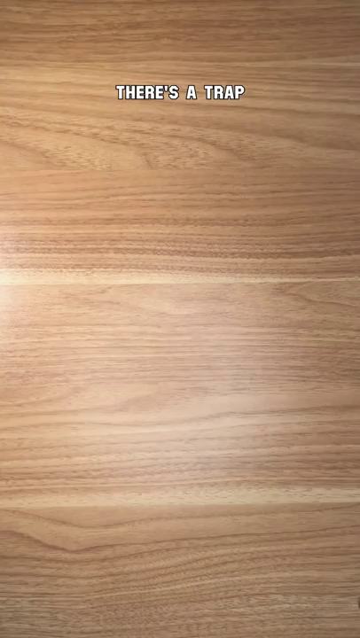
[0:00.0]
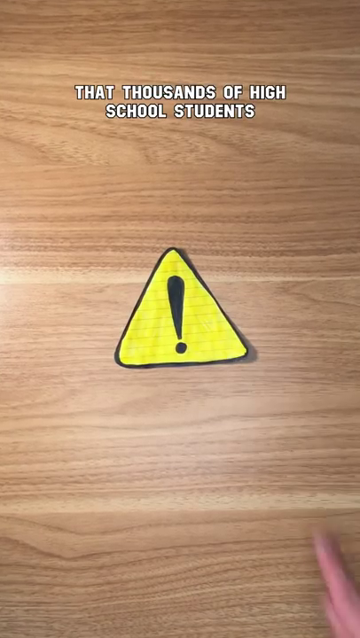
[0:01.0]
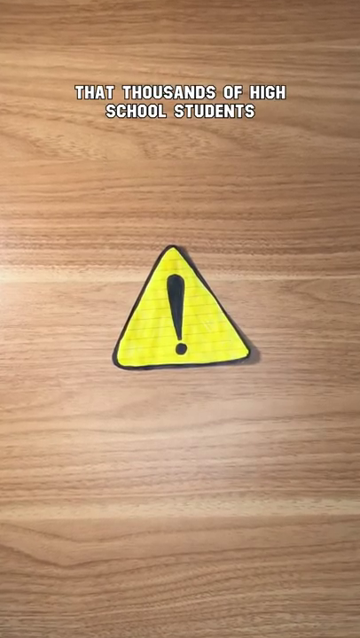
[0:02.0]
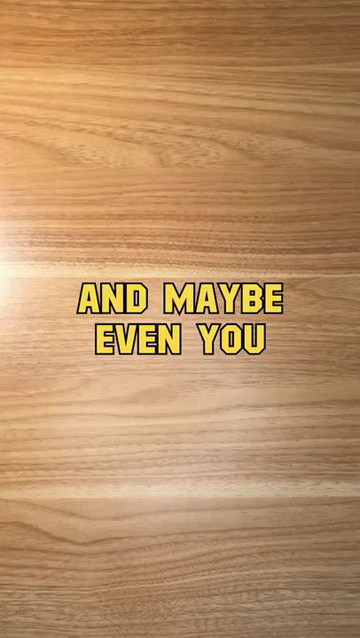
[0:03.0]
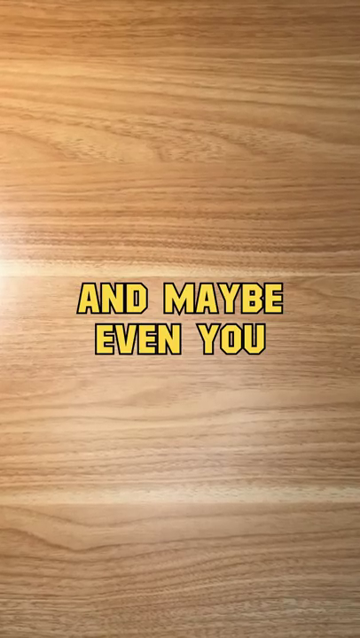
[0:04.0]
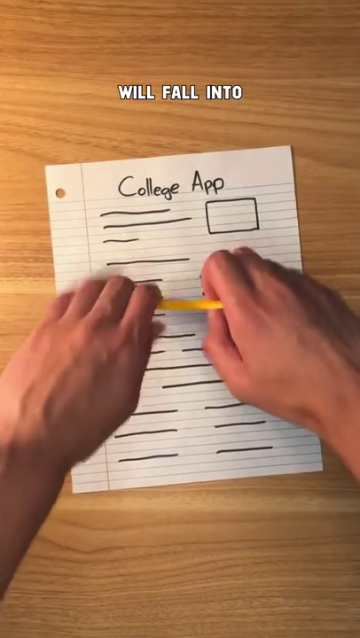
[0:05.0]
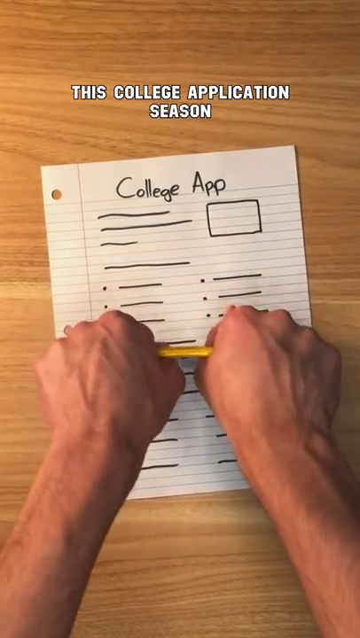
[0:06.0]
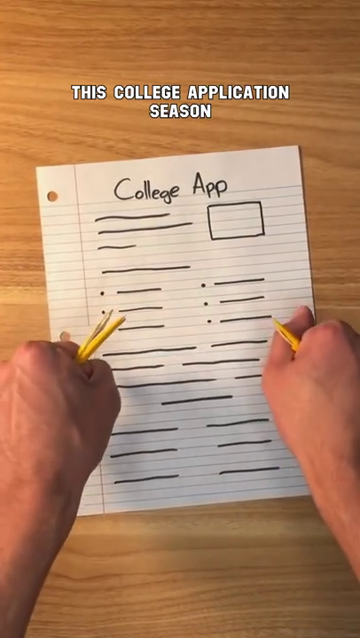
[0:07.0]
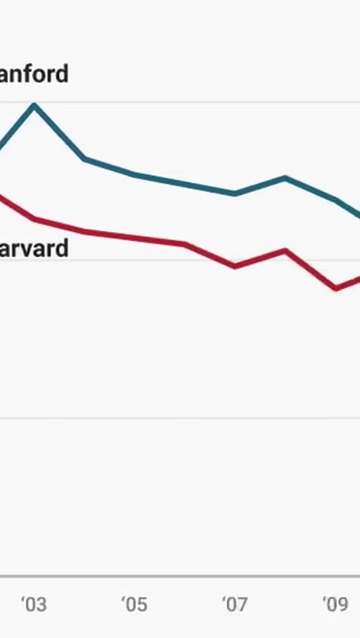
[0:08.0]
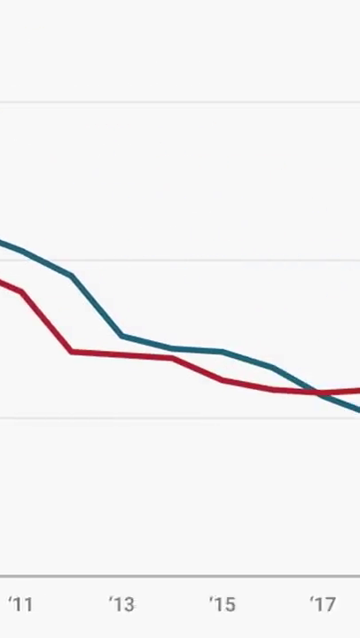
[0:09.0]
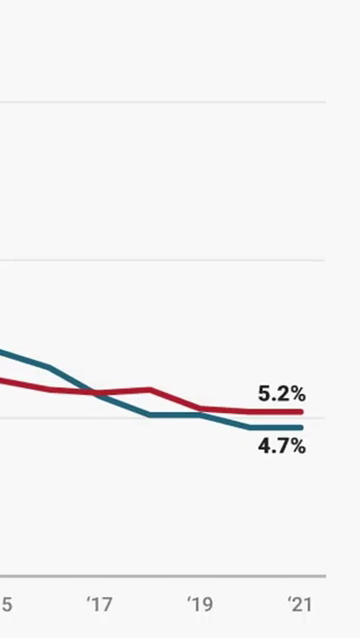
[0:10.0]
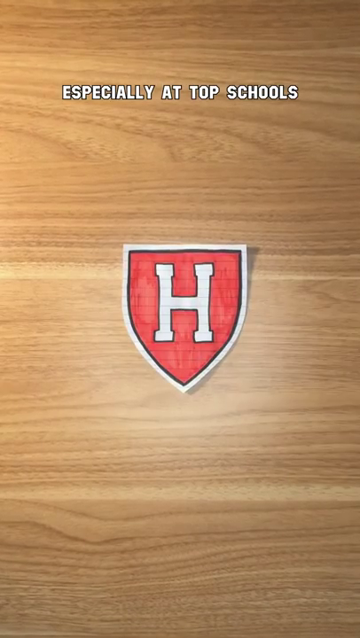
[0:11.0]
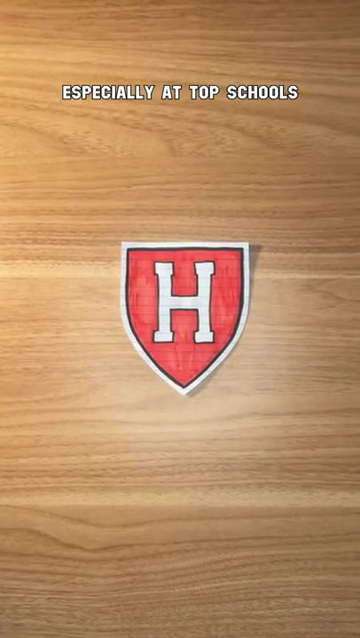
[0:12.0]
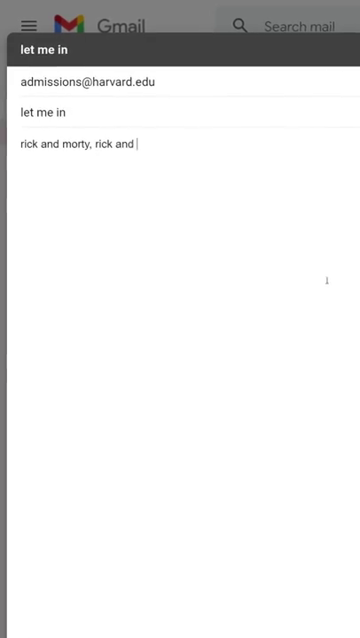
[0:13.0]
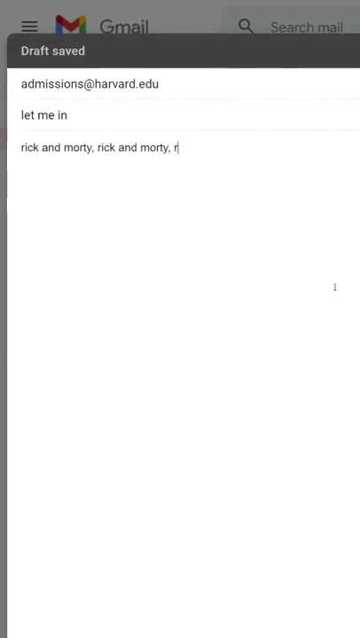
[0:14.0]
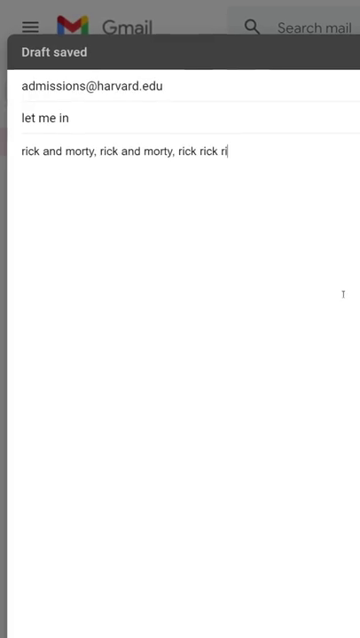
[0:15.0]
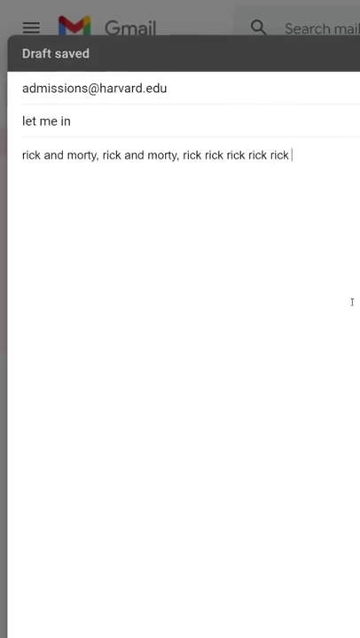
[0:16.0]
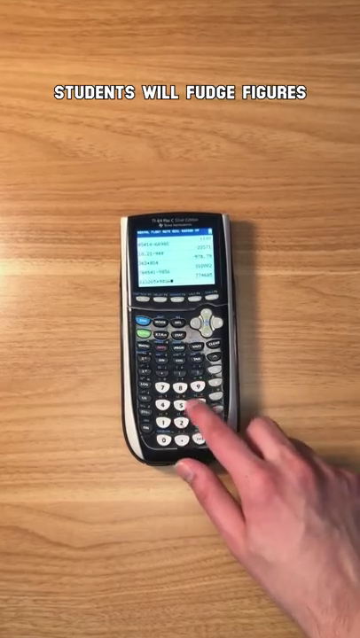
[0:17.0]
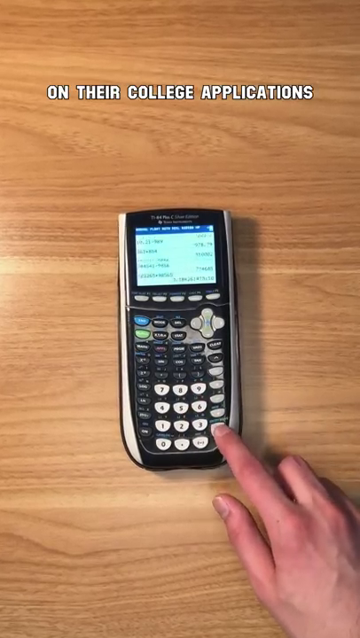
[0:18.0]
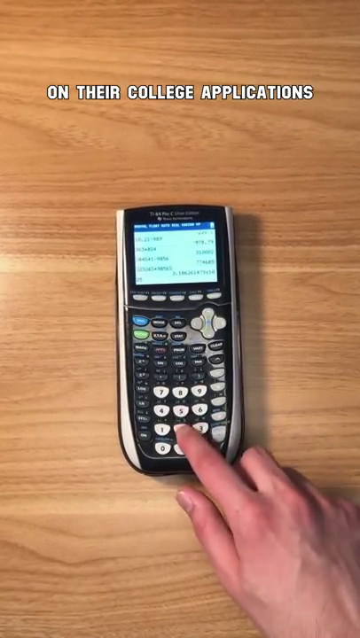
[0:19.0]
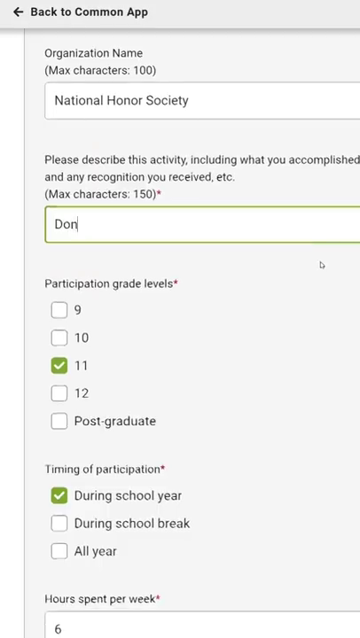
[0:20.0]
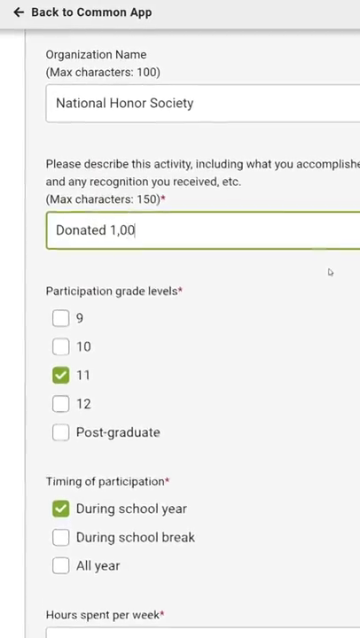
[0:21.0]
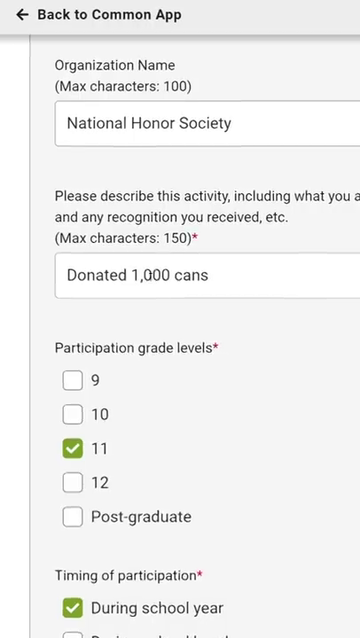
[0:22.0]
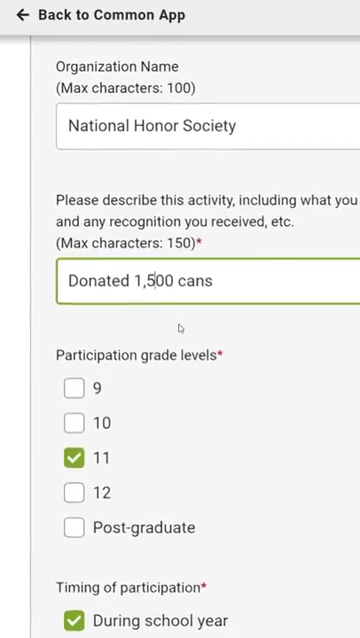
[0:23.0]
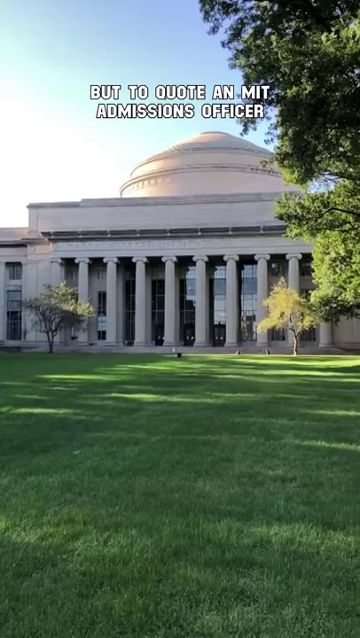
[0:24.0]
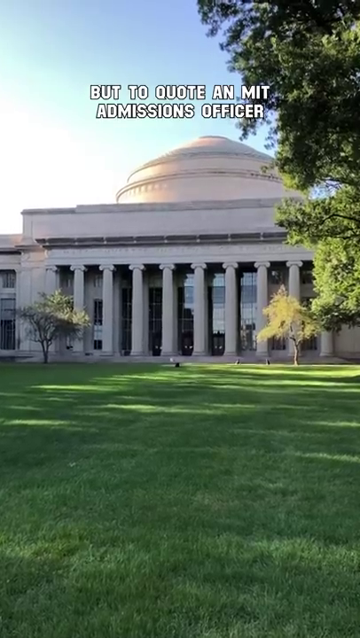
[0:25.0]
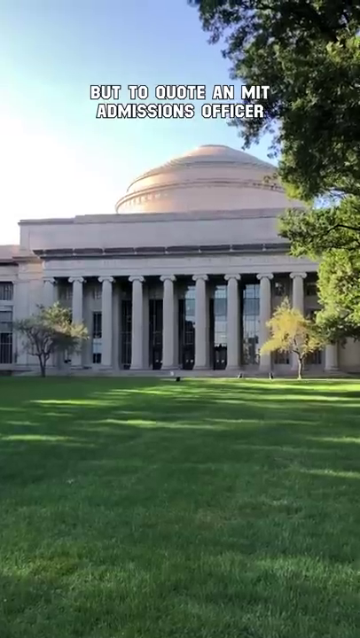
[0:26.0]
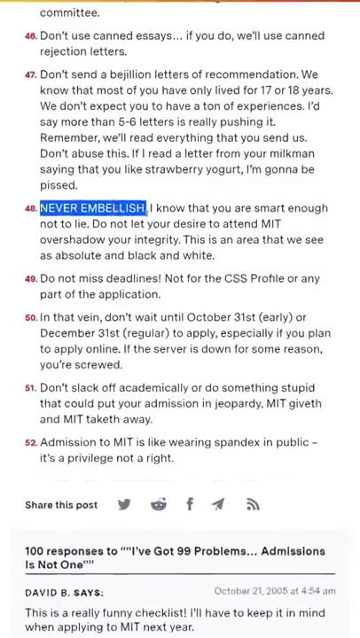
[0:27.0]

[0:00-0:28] On what looks like a table, someone pushes a yellow triangle warning sign and puts a batch of them in the middle of the table. Text over the warning signs reads "thousands of high school students and maybe even you." Next comes a picture of notebook paper with the text "college app," followed by the letter H in a university badge and then a calculator.